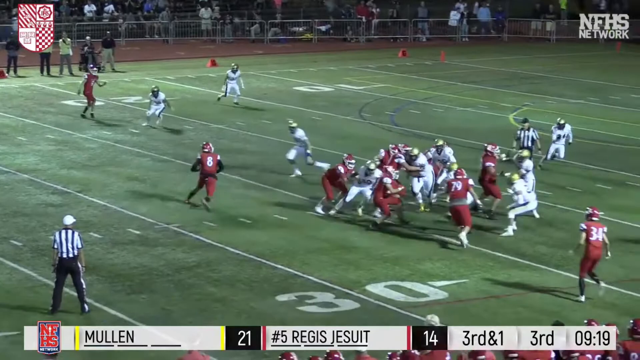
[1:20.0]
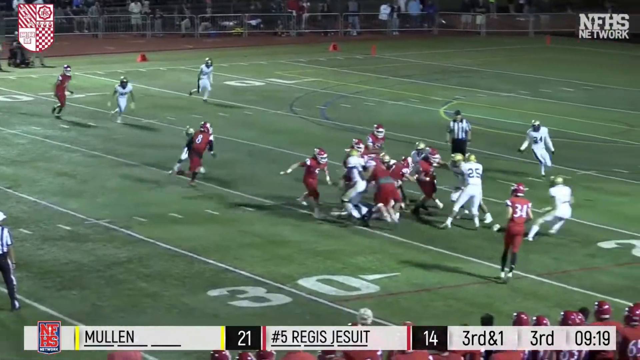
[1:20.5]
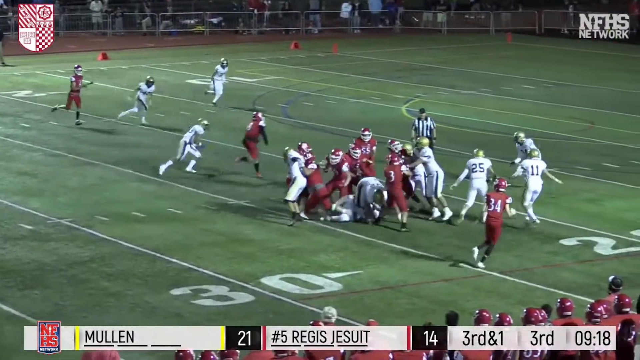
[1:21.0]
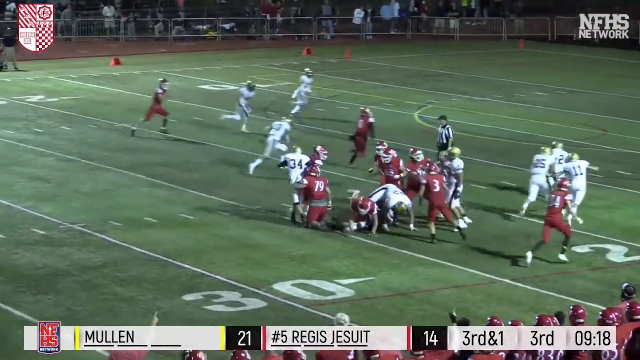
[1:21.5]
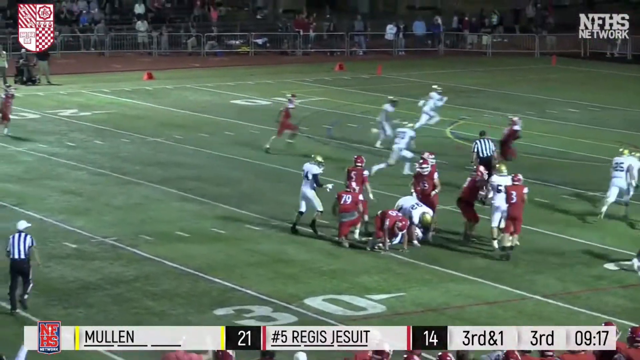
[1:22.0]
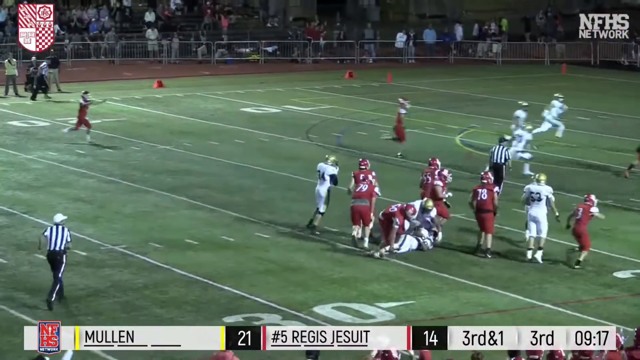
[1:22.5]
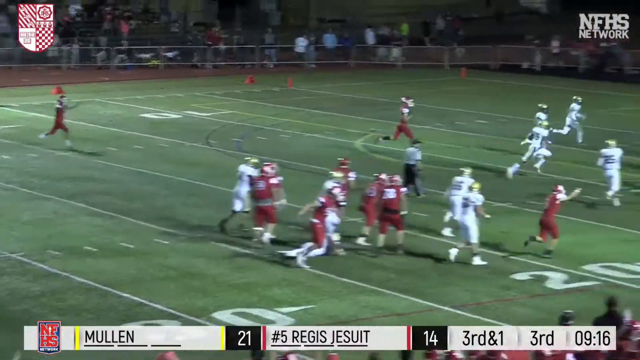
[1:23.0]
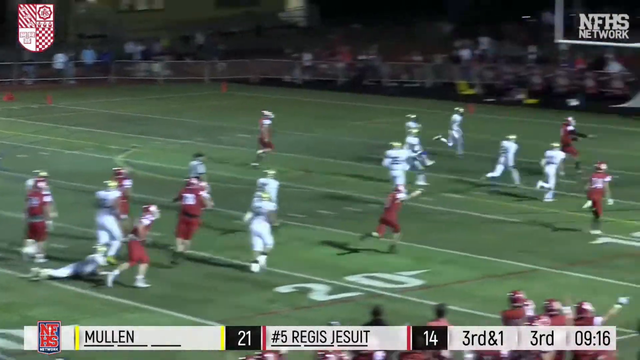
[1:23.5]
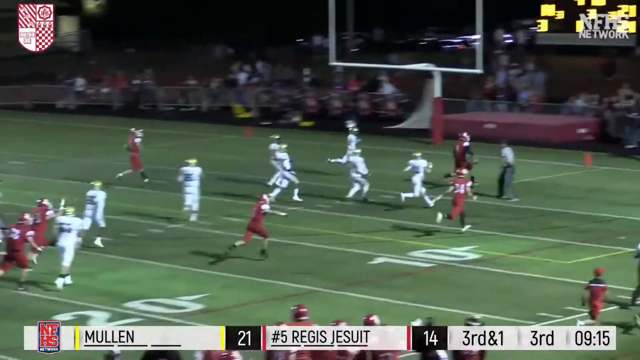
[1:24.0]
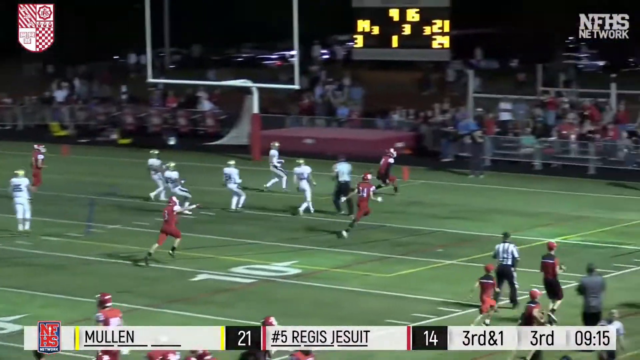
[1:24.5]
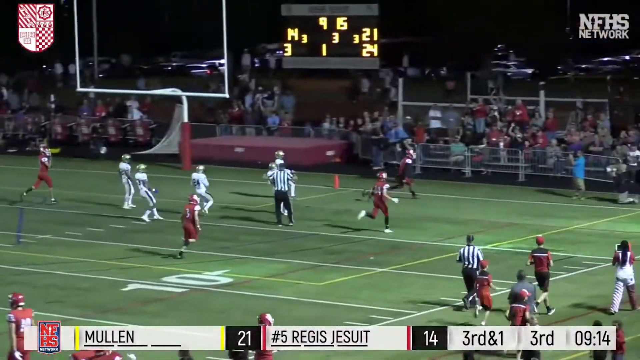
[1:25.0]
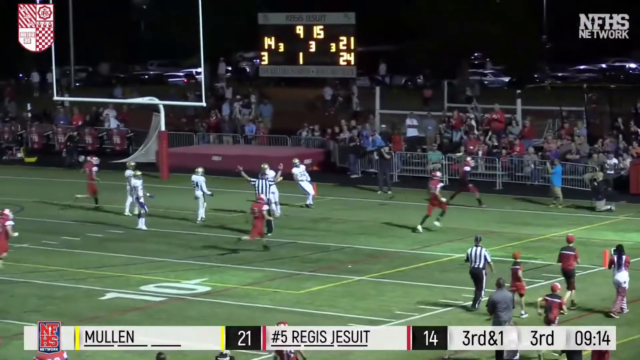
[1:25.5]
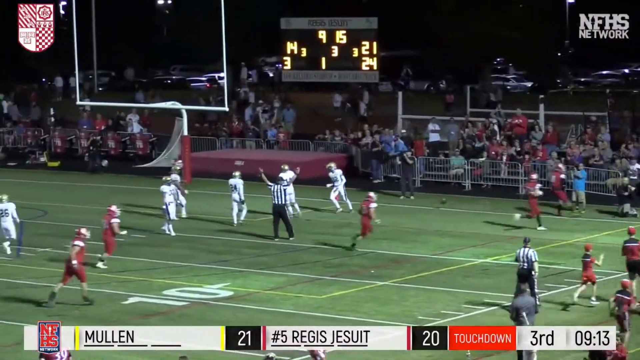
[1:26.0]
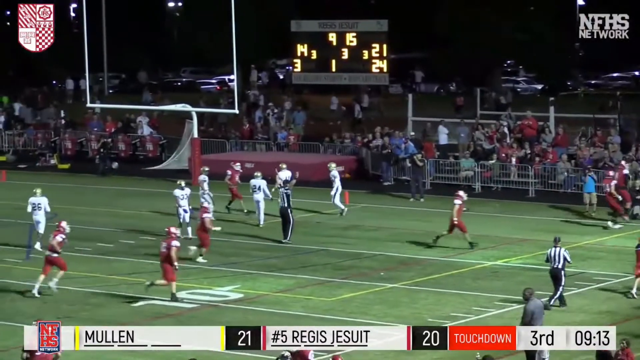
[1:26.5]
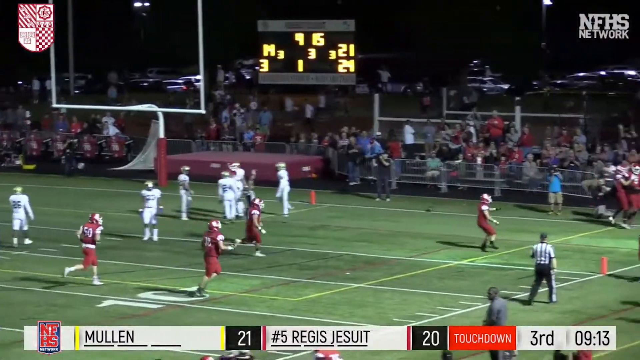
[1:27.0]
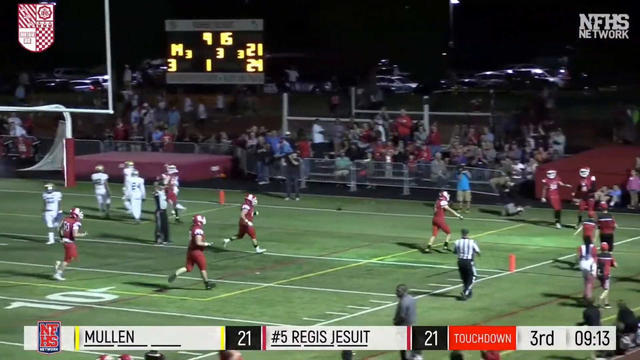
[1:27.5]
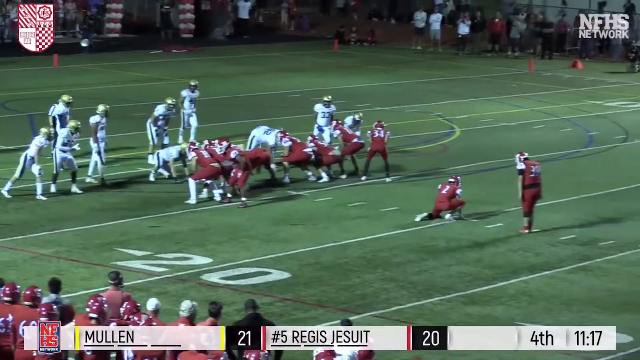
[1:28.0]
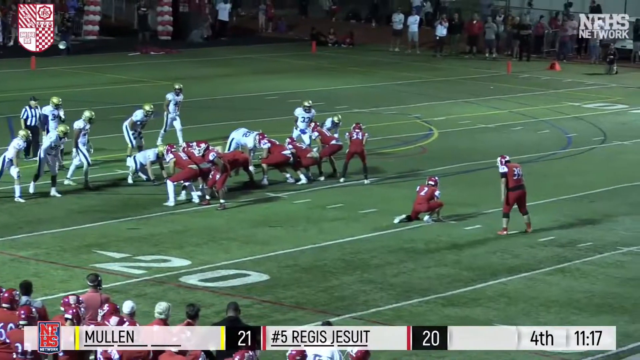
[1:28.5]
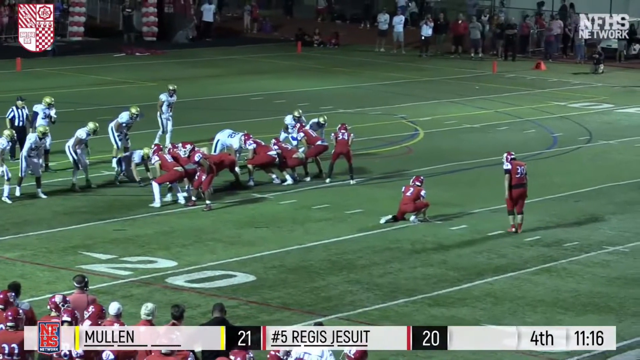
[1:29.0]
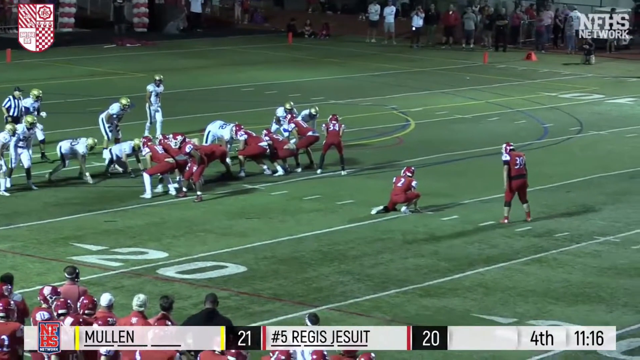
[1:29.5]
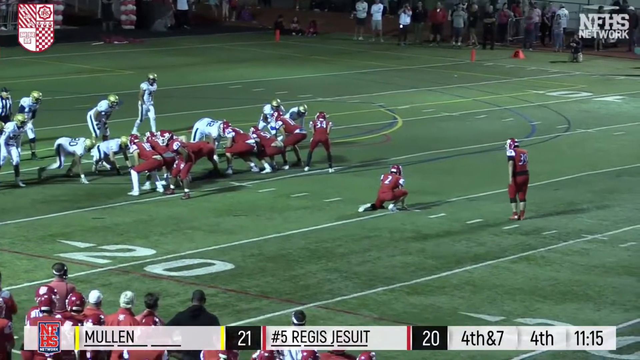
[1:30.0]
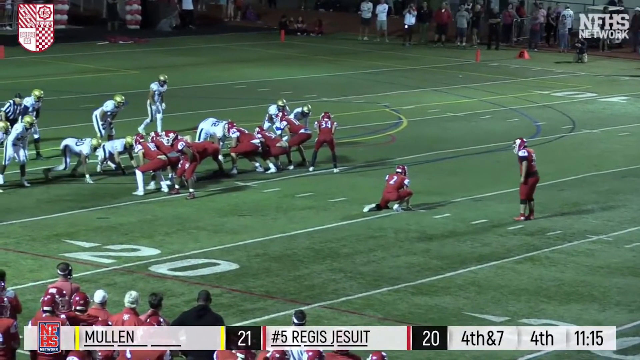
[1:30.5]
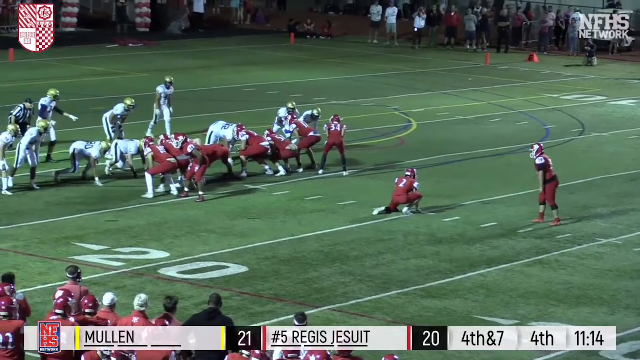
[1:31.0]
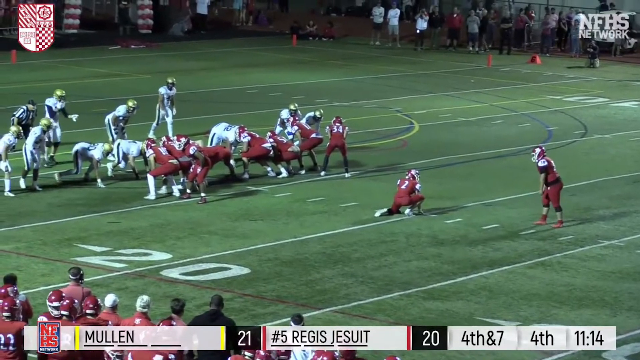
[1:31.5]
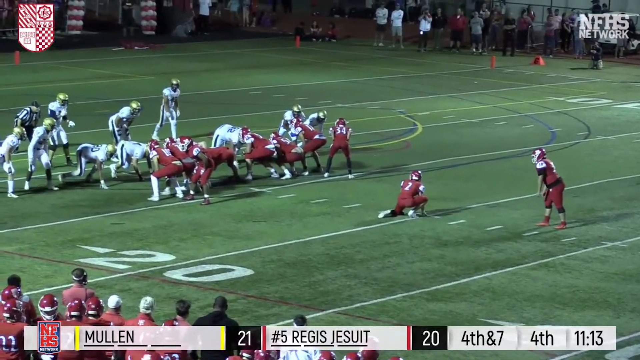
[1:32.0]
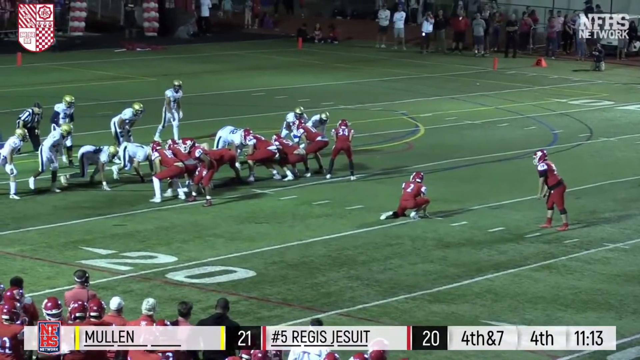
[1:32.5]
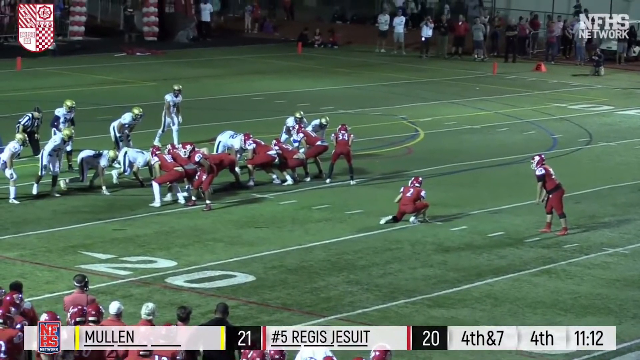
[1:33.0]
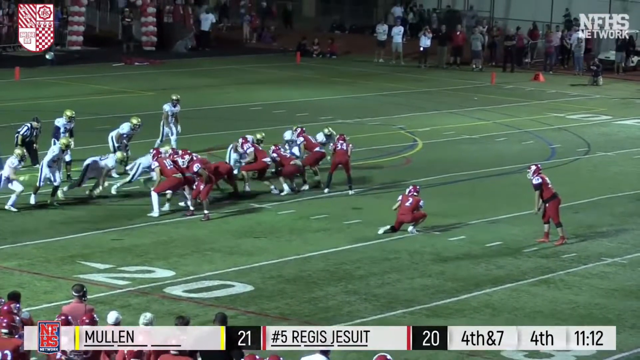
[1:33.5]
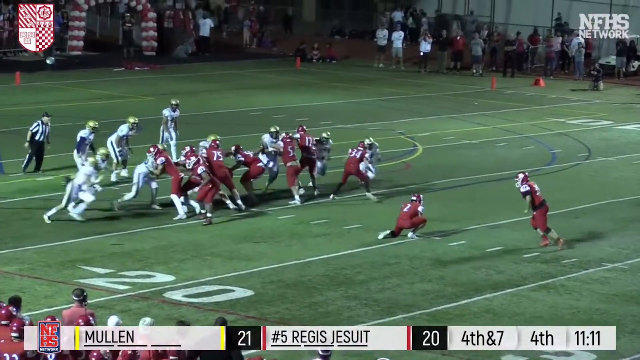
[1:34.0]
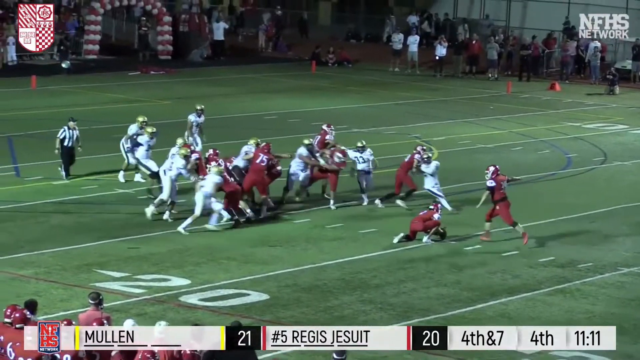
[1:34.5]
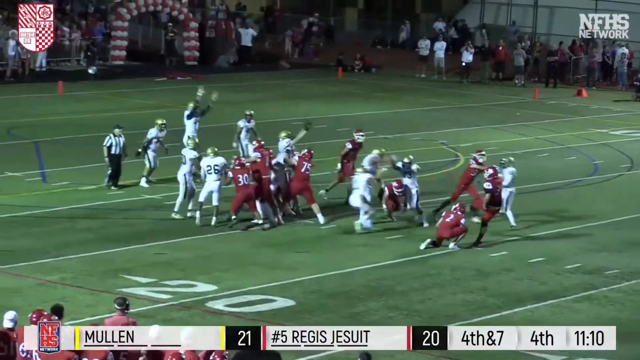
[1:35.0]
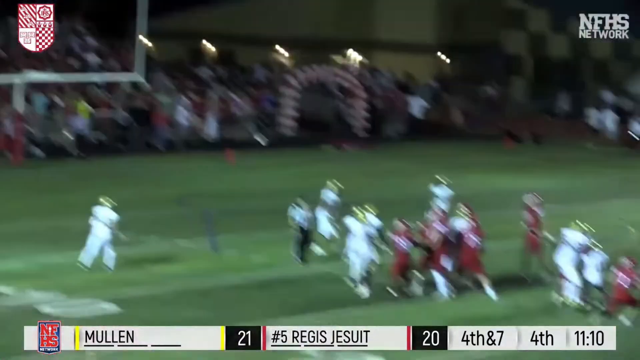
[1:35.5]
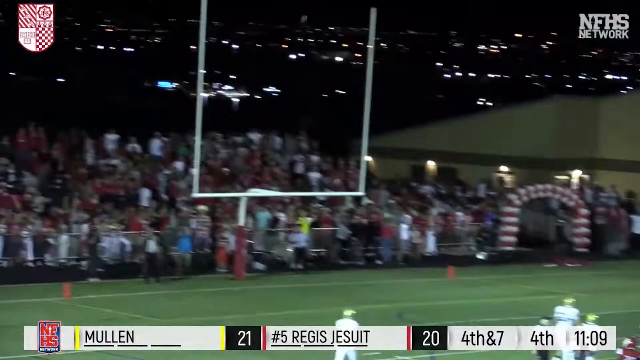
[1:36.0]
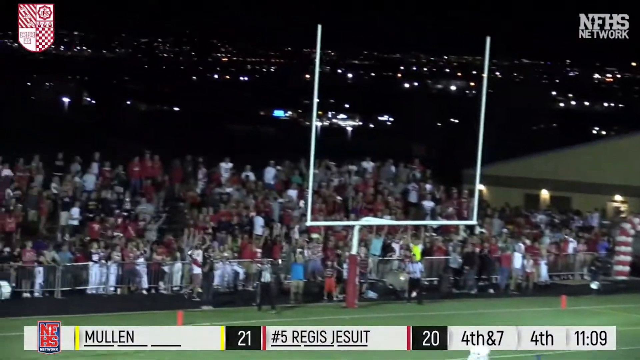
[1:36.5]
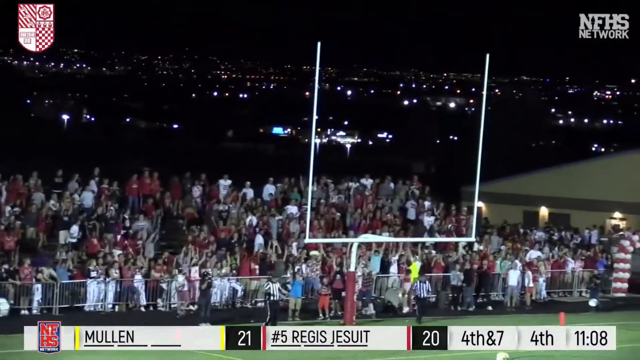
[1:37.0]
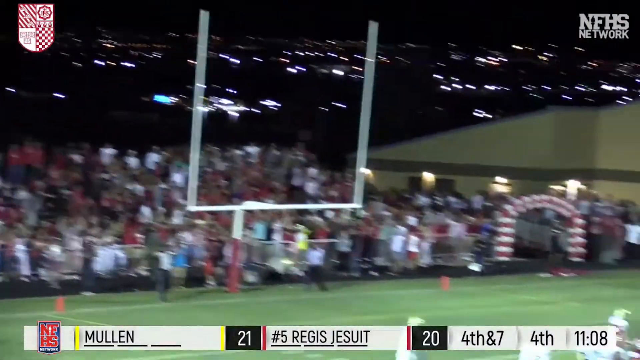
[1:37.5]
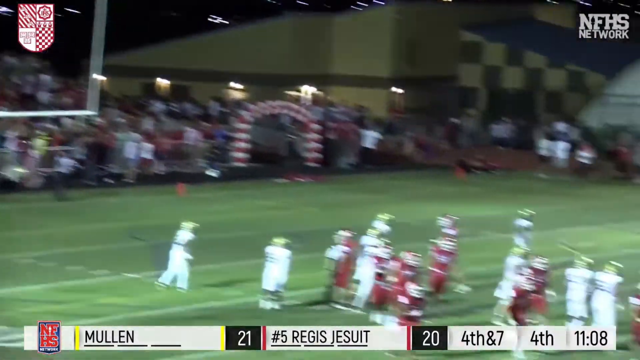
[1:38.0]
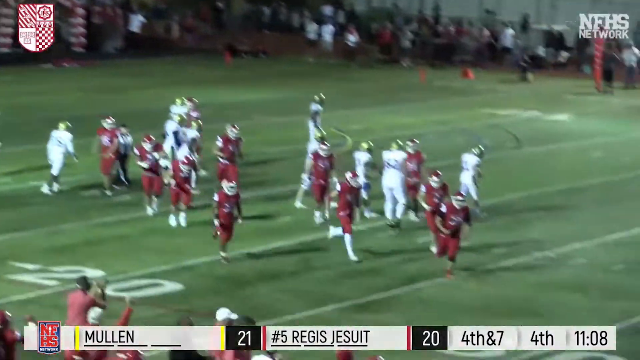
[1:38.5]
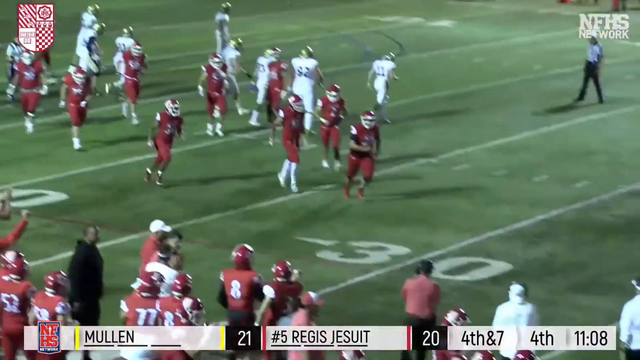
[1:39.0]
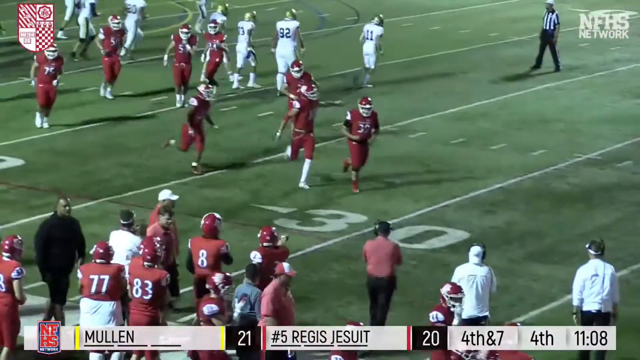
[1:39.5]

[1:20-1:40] The red-shirted quarterback fakes the ball to the running back, cuts upfield, and scores a touchdown. It looks like the kicker makes the extra point, making the score apparently 21 to 20. The next scene shows a kicker on the red-shirted team lined up for a field goal at the 20-yard line, with both teams in special teams formation. It is 4th and 7 in the fourth quarter. The ball is hiked to teammate number two, who holds it about five yards from the kicker. The kicker kicks the ball through the upright, so it looks like he made it; the score does not change before the shot ends.